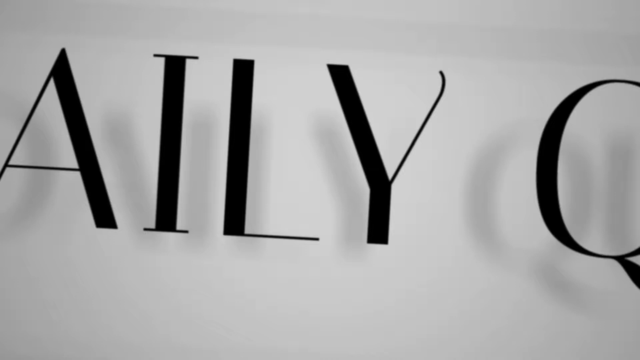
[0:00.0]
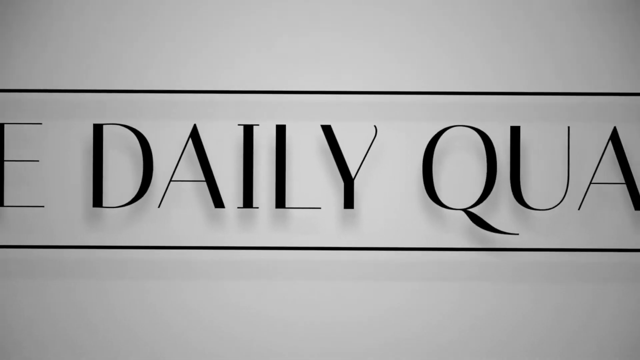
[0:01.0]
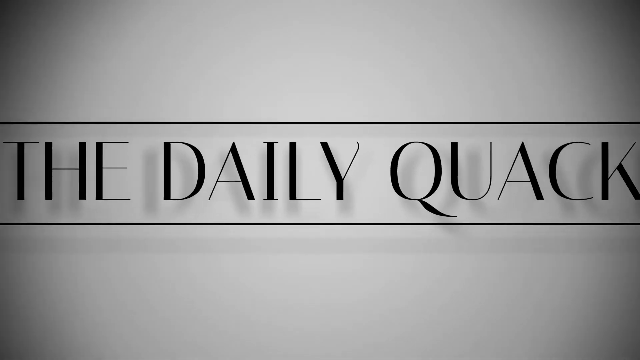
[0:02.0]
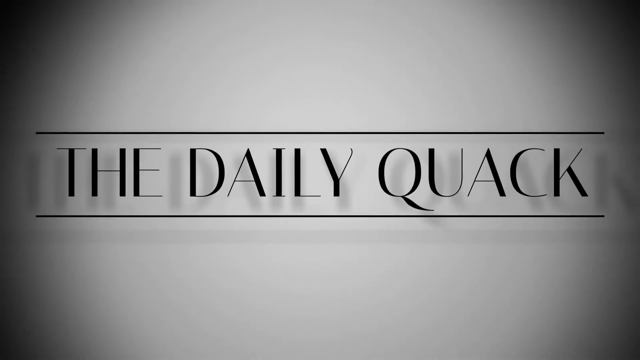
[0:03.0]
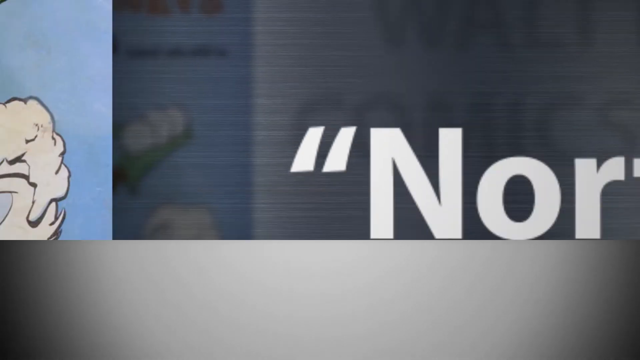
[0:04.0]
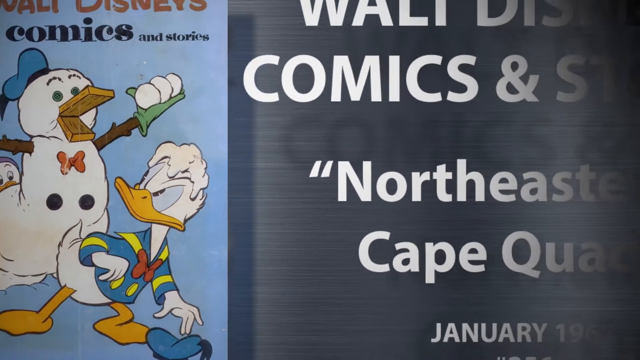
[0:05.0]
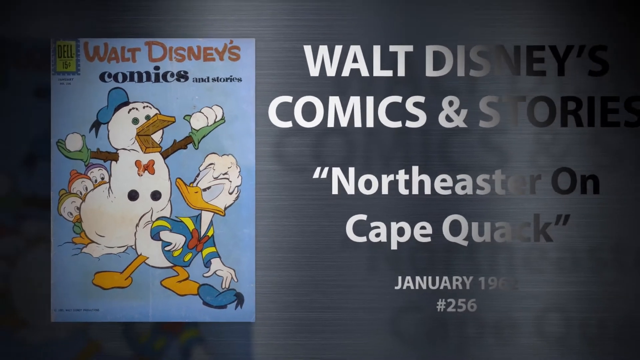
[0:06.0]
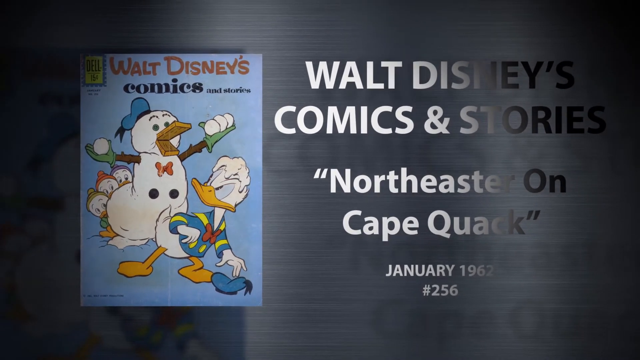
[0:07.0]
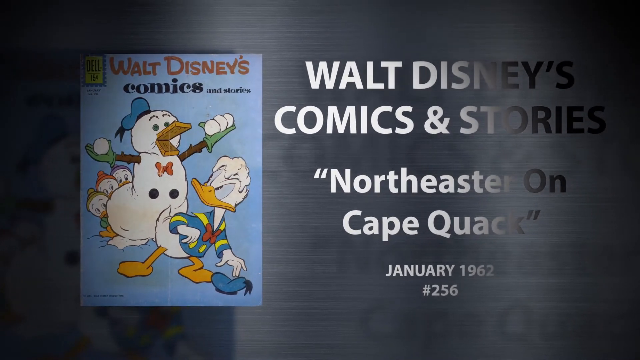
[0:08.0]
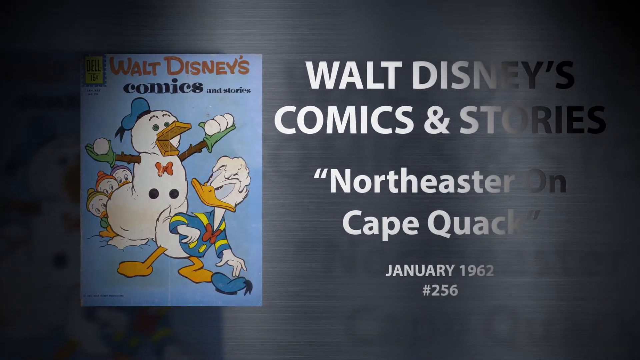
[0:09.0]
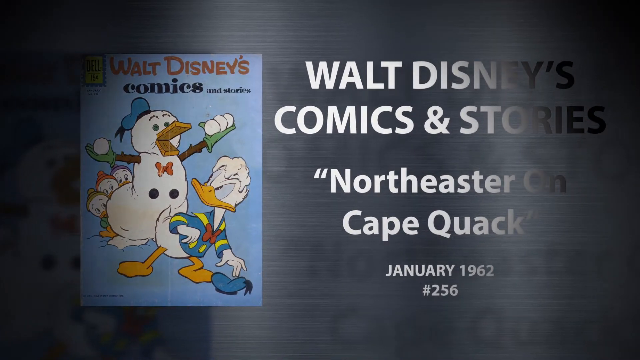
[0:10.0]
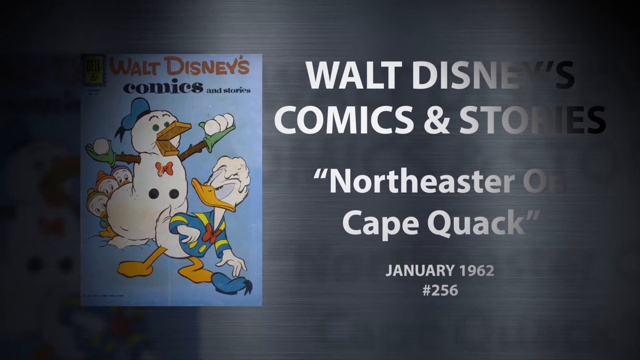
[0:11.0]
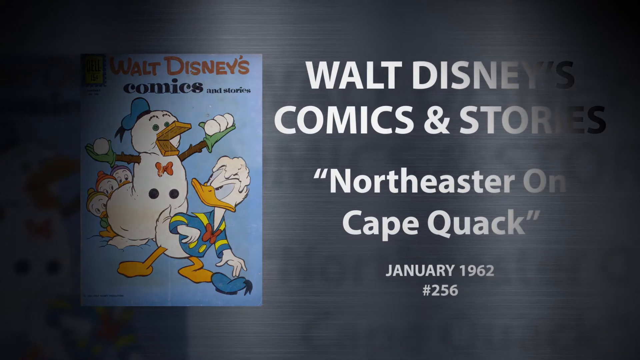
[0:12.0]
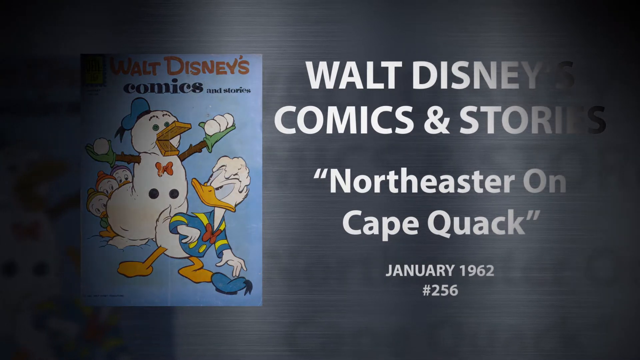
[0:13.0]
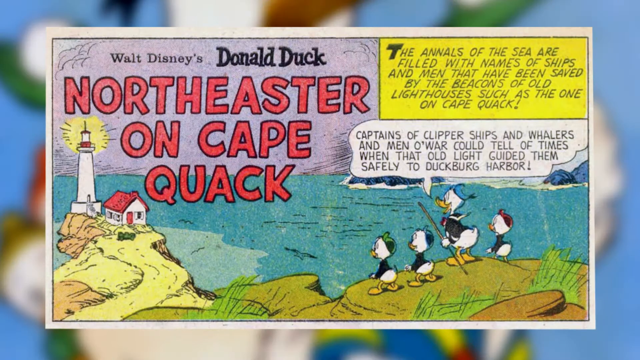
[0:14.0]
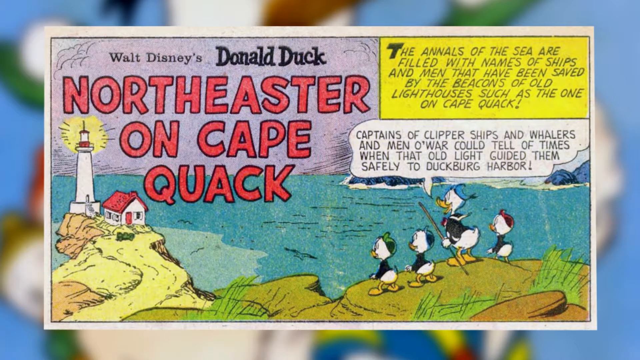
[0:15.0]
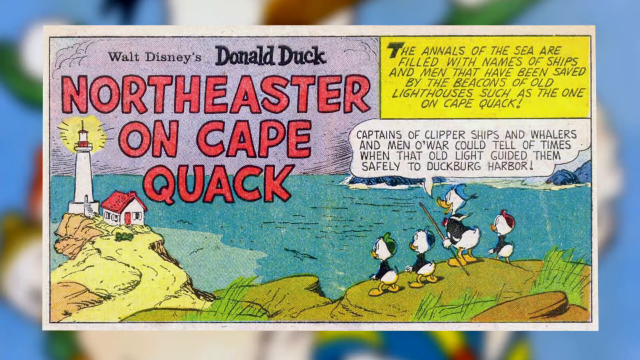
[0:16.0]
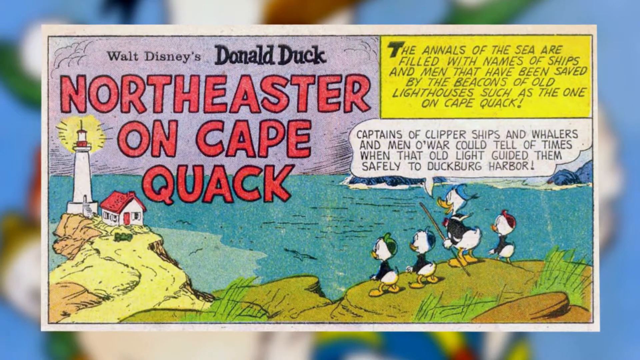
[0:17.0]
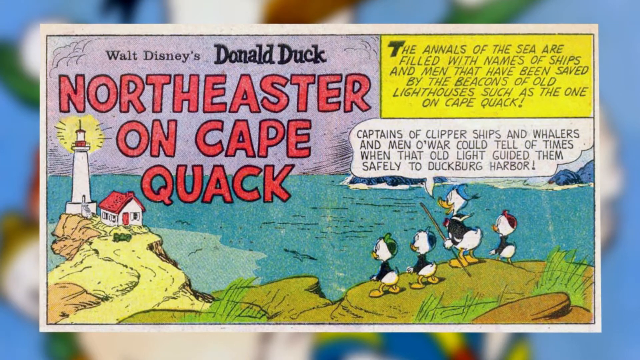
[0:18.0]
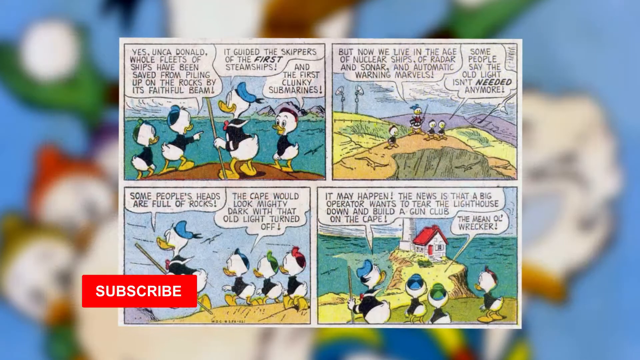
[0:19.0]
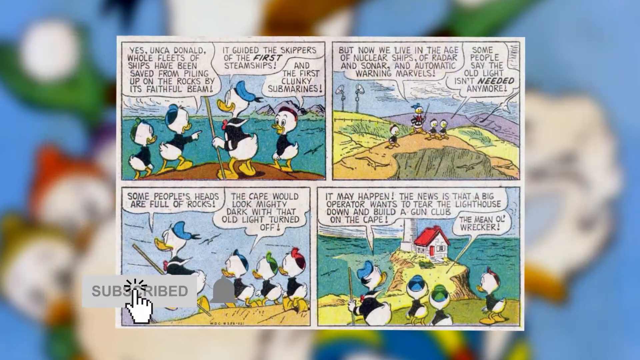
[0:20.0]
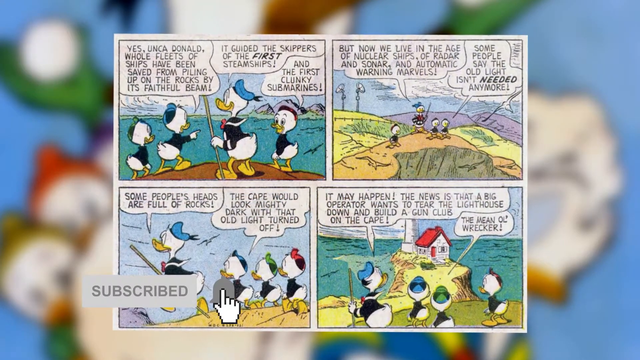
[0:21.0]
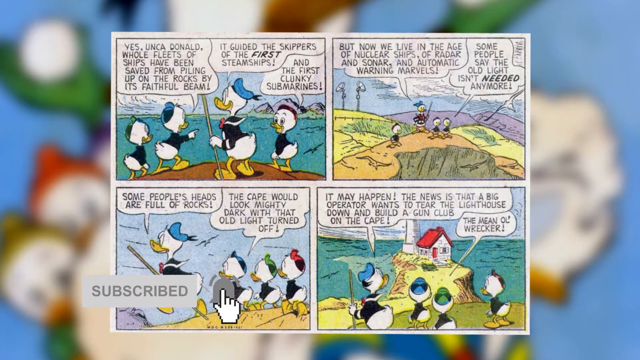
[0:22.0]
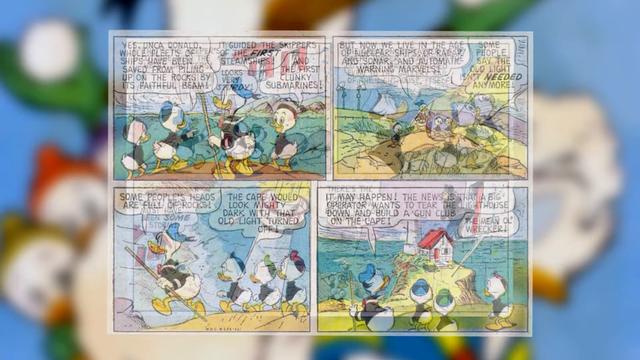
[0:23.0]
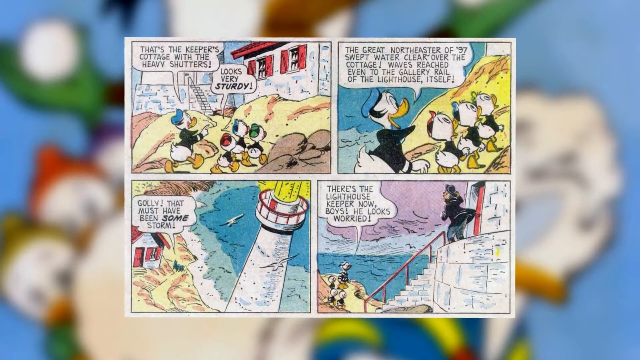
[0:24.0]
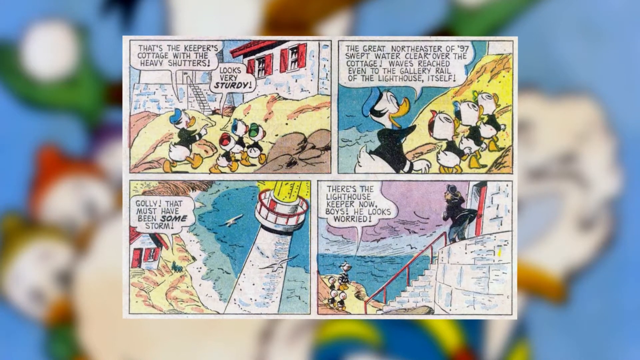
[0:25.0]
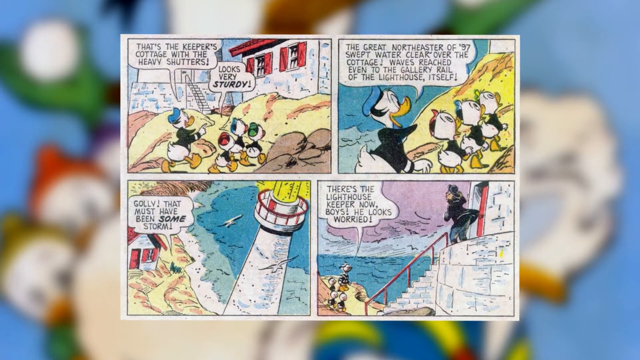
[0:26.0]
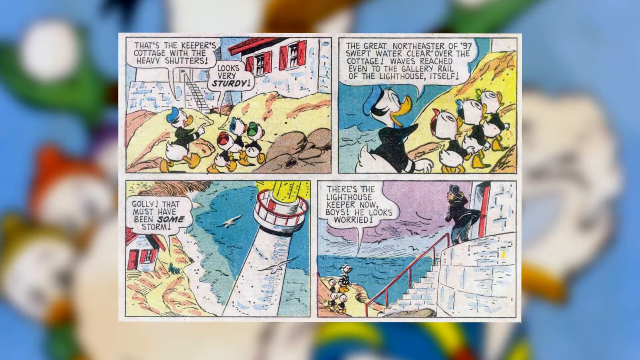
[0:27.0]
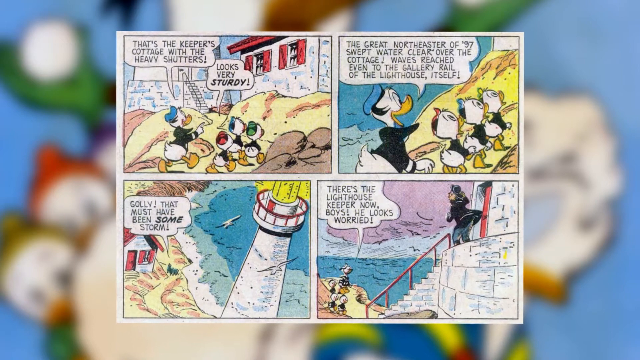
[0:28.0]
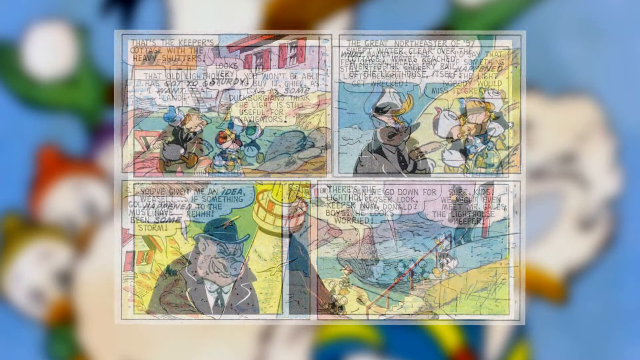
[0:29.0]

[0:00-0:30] A comic that seems to come from the Daily Quack is featured. It comes from Walt Disney's Comics and Stories, is titled North Easter on Cape Quack, was published January 1962, and is number 256. The cover has a picture of Donald Duck and a large snowman, along with the three smaller ducks. The video then shows the comic strip, which begins with an image showing the title "North Easter on Cape Quack" and a picture of what looks like Donald Duck with the three smaller ducks standing on a large rocky piece of land next to a body of water, looking at a lighthouse kind of off in the distance. As the comic continues, a page with four boxes shows different images: Donald Duck and the three little ducks seem to be walking toward the lighthouse, which seems to be involved in some kind of controversy in which people want to tear it down as unnecessary. Donald Duck and the three little ducks set out to save the lighthouse, and as they approach it they meet a lighthouse keeper who seems to be very worried.